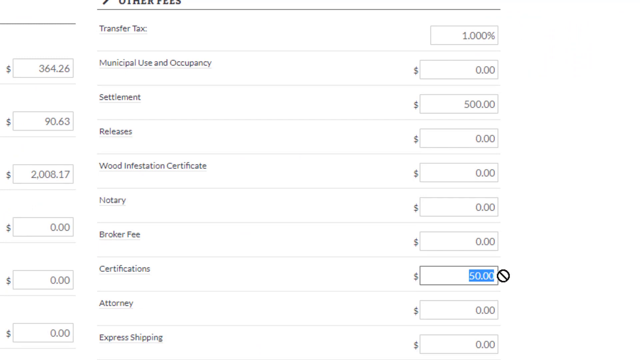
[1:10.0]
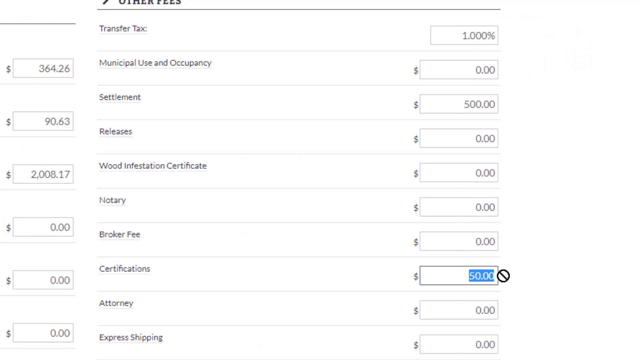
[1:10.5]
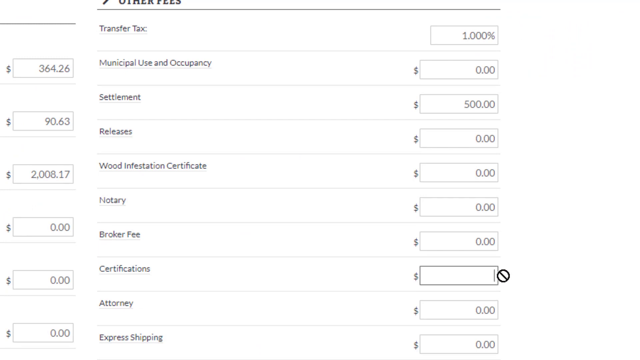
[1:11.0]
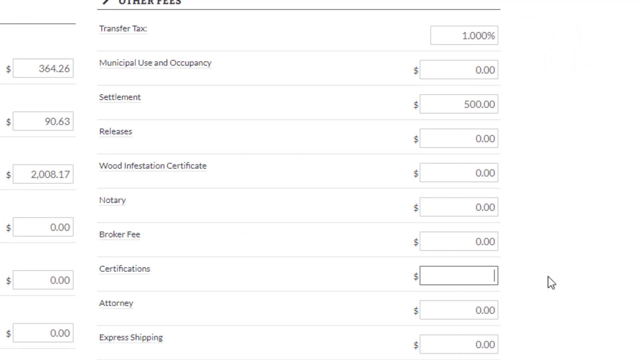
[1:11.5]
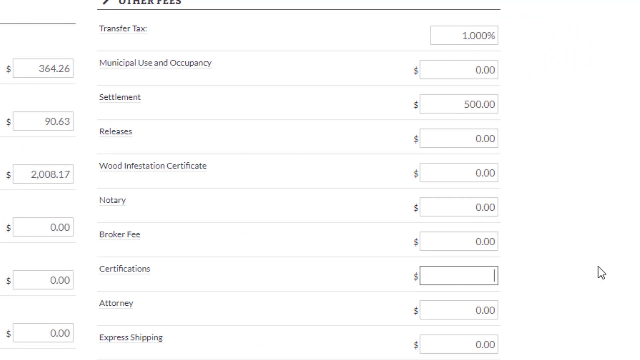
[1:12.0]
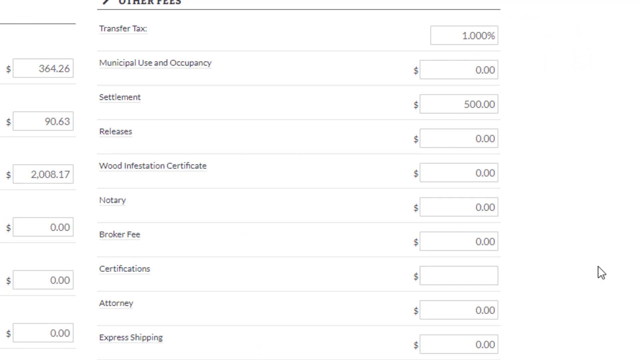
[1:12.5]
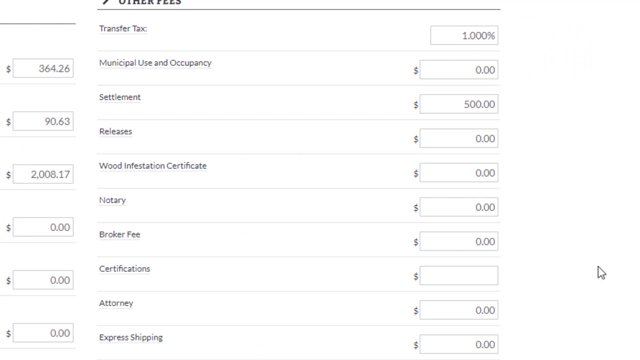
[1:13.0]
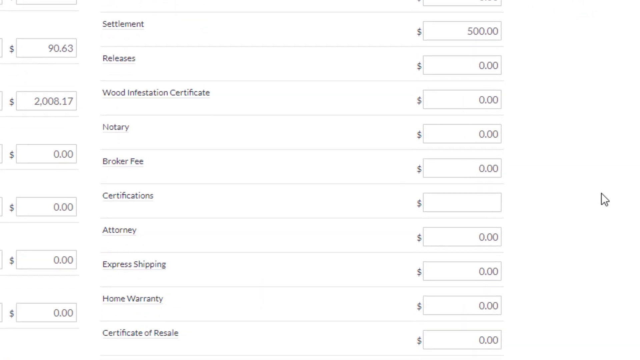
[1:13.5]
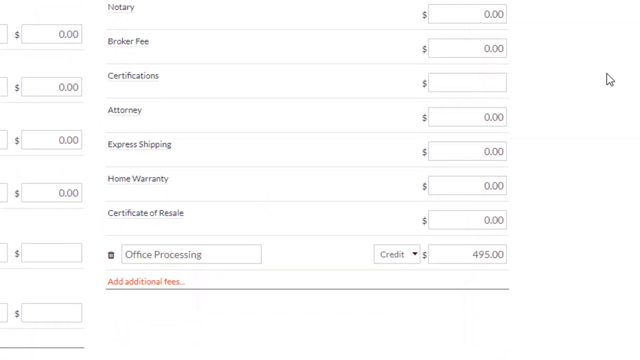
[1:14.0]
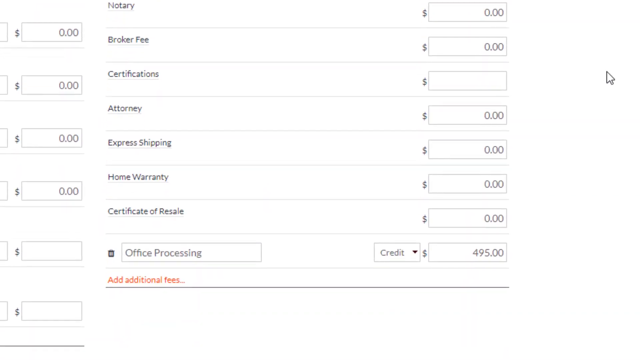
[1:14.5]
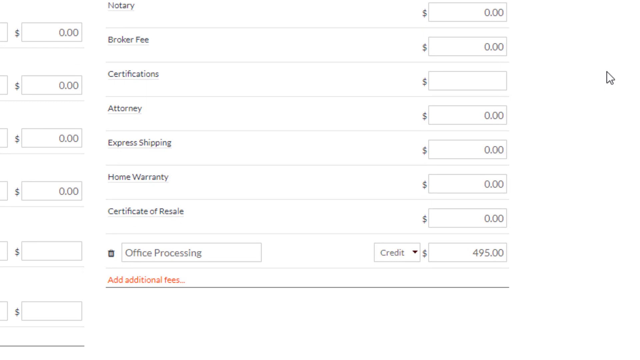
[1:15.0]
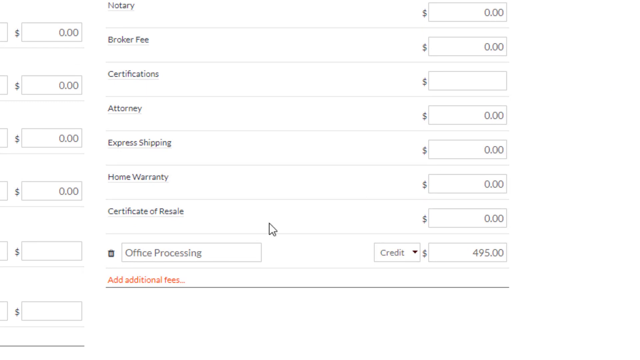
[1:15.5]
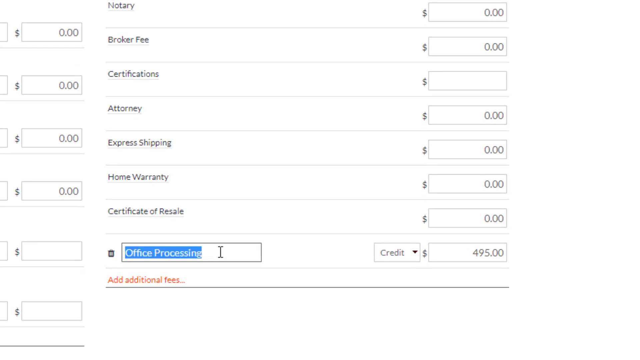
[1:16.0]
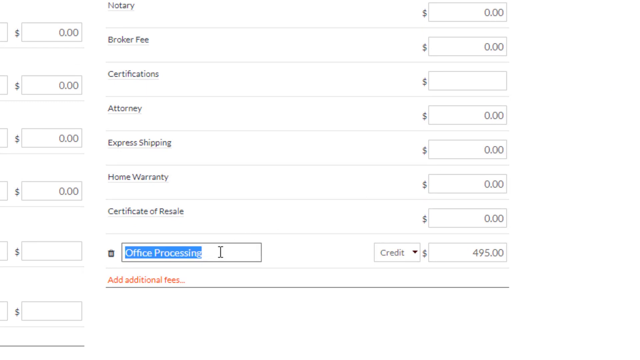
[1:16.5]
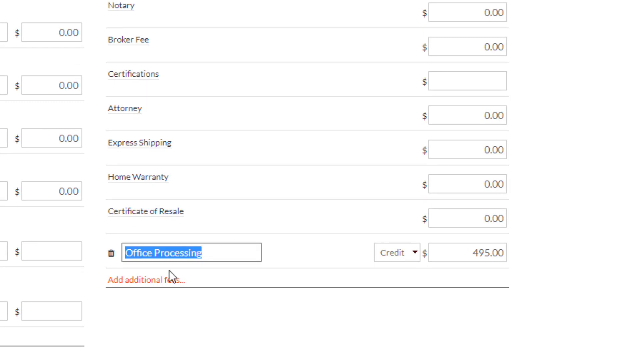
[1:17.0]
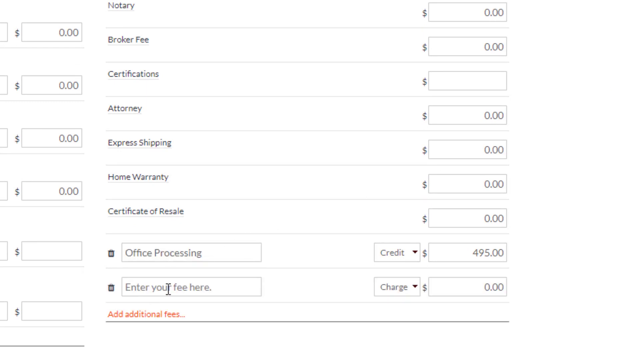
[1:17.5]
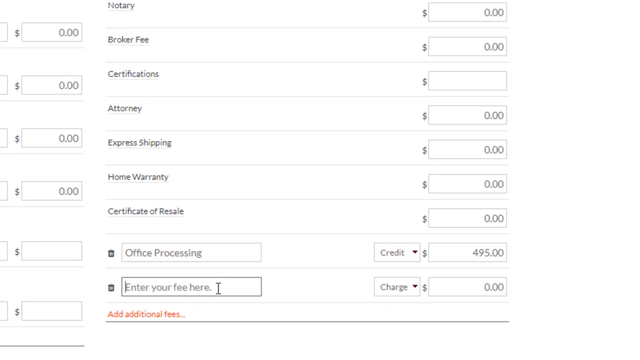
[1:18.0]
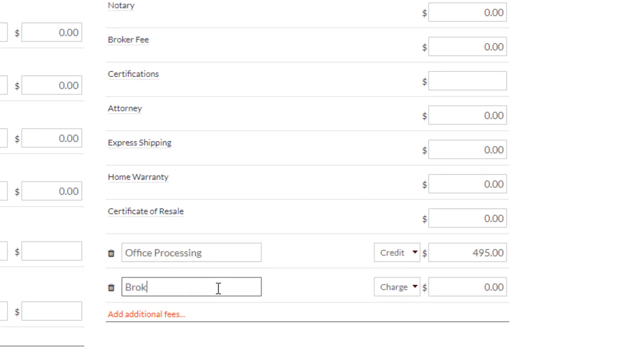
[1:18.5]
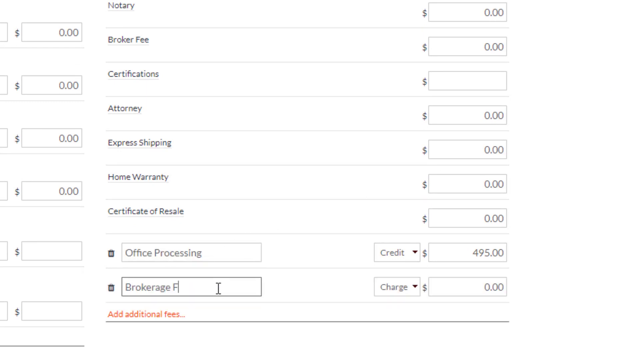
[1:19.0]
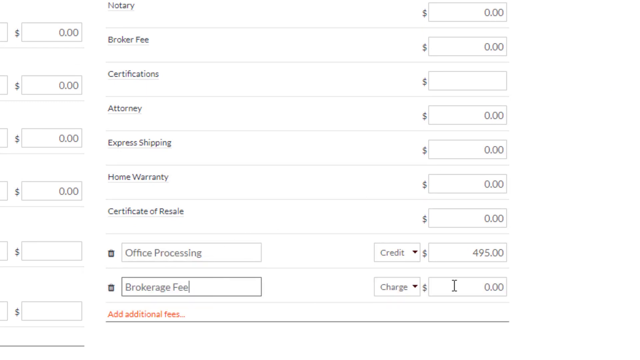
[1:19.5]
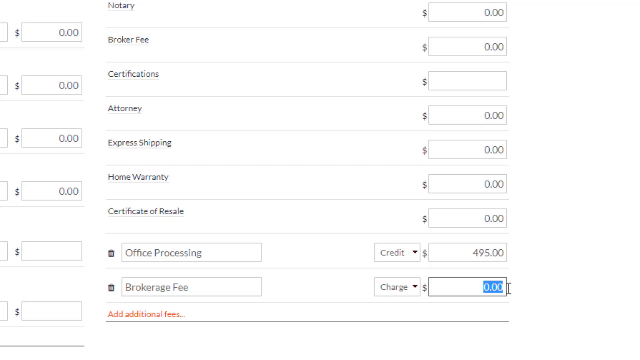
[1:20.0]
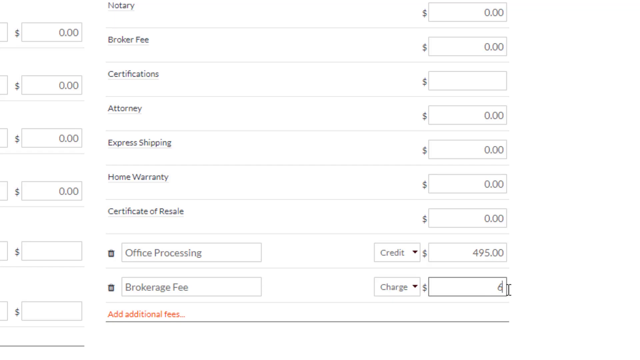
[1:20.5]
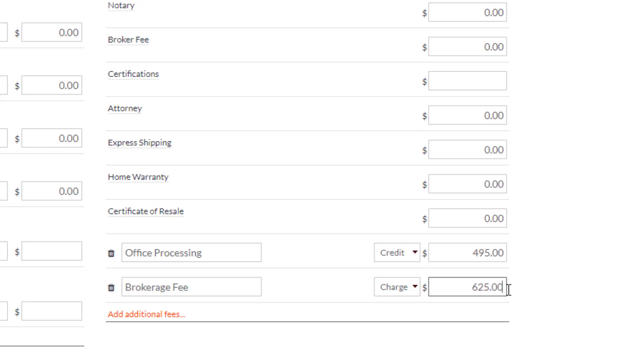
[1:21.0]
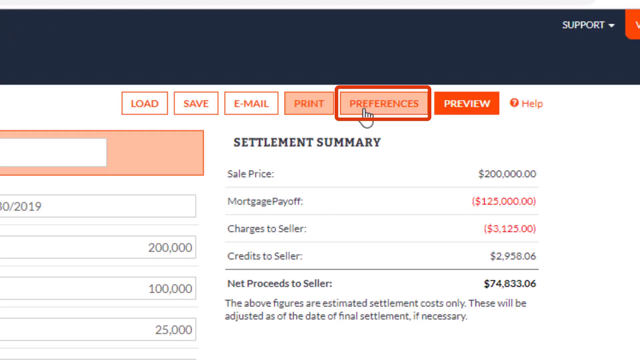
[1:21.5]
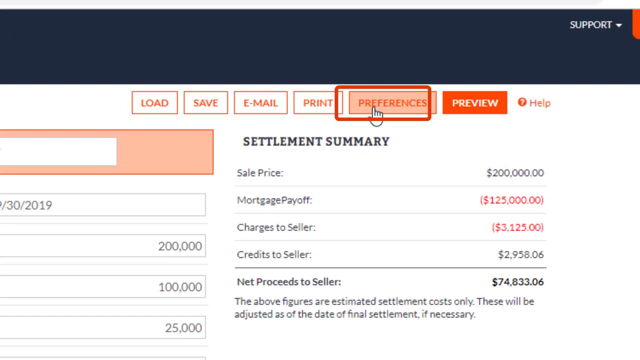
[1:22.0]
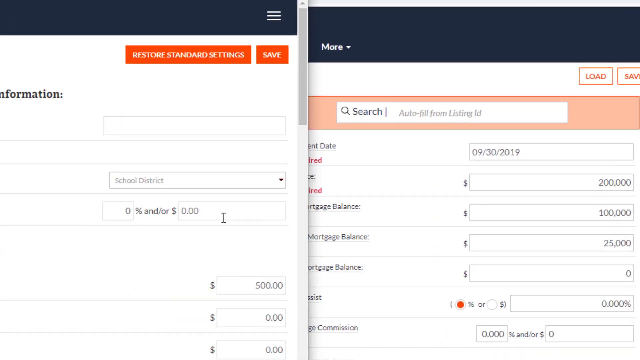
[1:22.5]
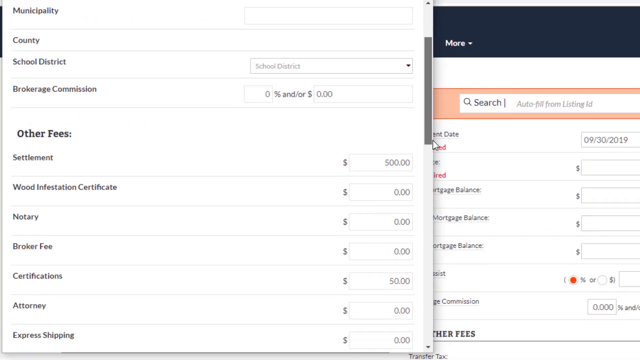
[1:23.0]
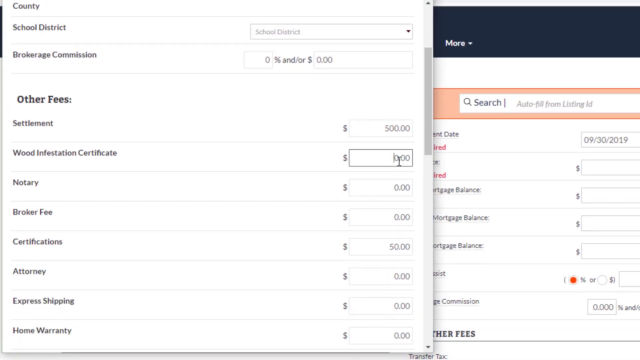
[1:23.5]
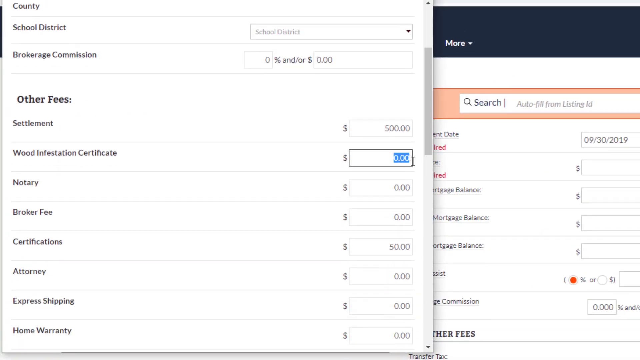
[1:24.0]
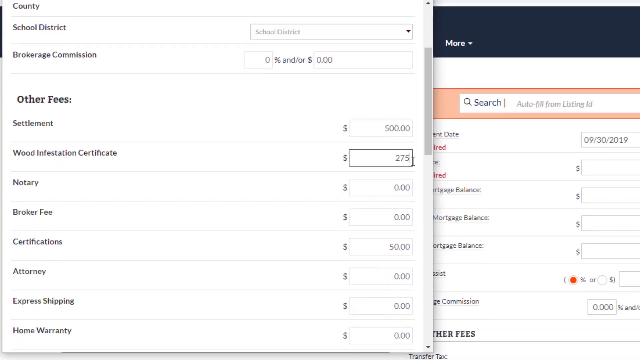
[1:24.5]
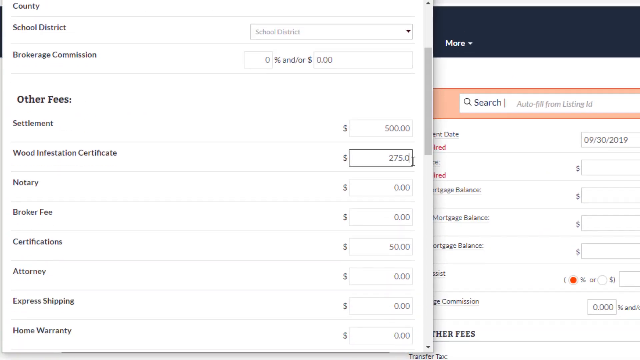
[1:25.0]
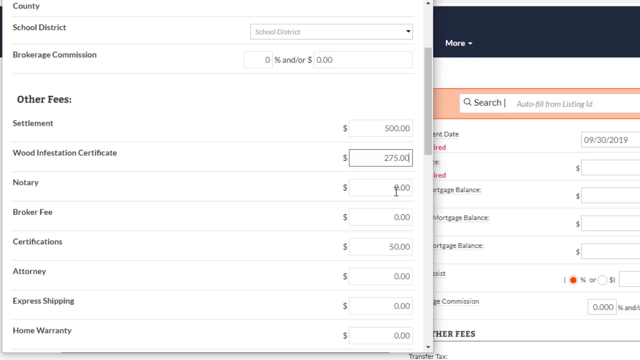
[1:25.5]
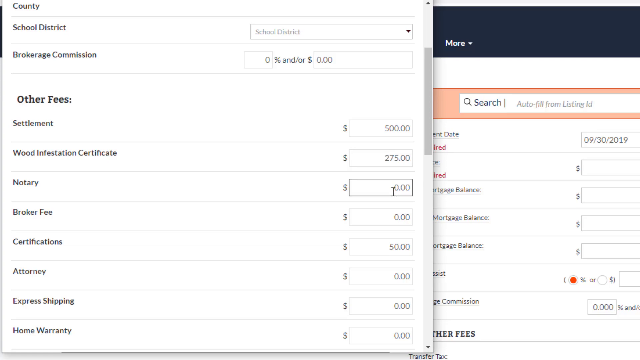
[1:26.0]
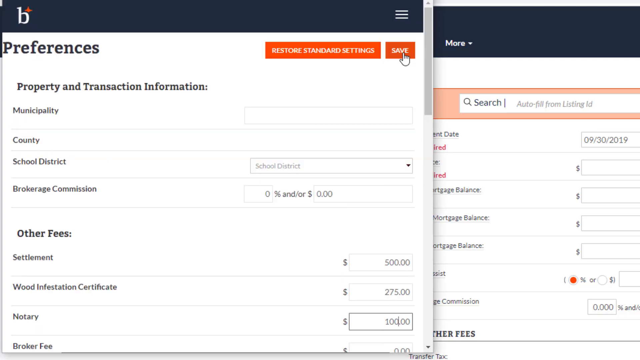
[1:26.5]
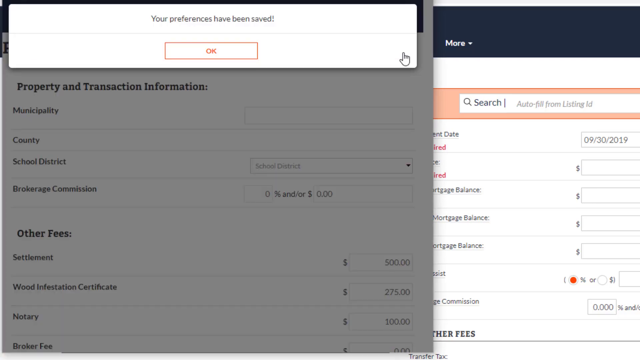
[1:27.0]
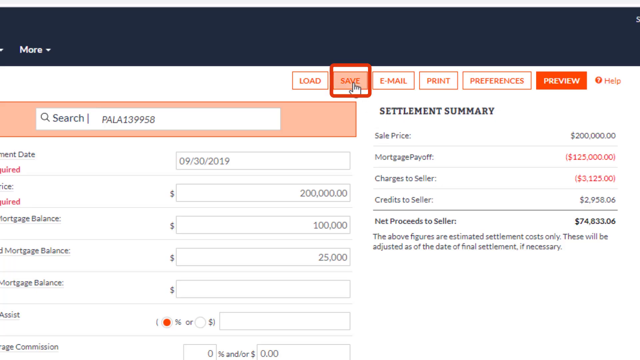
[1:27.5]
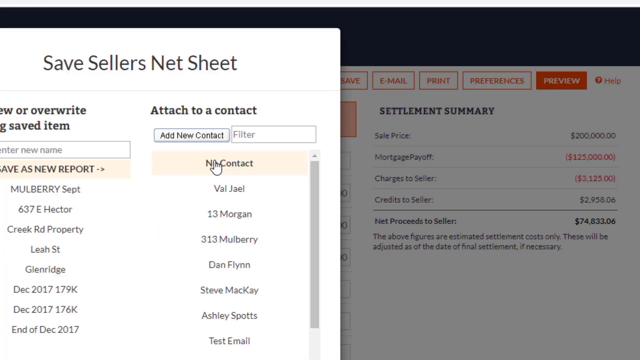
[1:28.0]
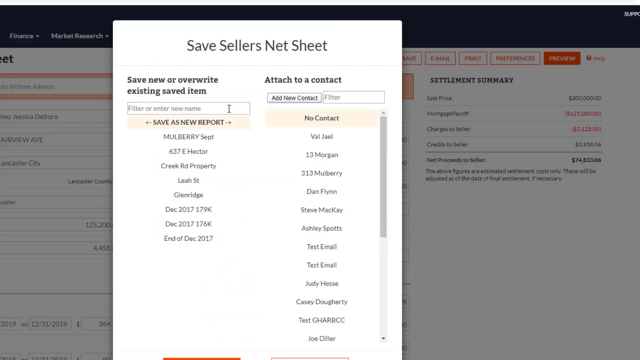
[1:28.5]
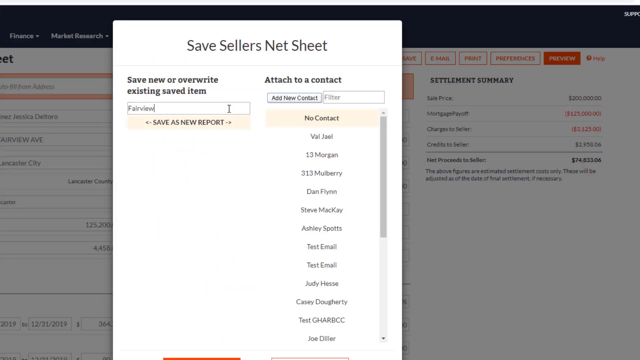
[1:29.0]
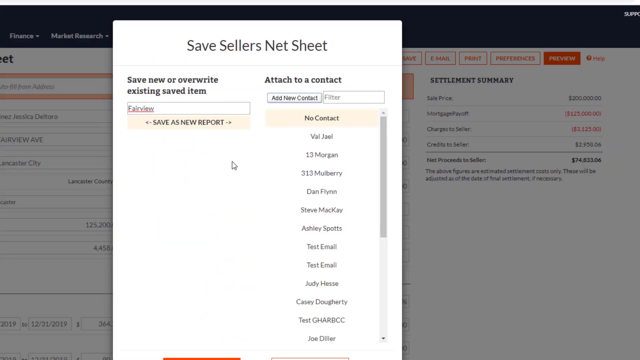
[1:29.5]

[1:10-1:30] The zoomed-in view of the Other Fees portion of the sheet shows its entries: transfer tax set to 1%, municipal use and occupancy set to zero, settlement set to $500, releases set to zero, wood infestation certificate set to zero, notary set to zero, broker fee set to zero, certifications set to $50, and attorney set to zero dollars. The user deletes the entry for certifications. He then adds an entry at the bottom of the list that says "Office Processing"; in a drop-down menu, credit is selected, and the number 495 is entered. He adds another fee by clicking the "Add Additional Fees" button, enters the title "Brokerage Fee," and puts the charge at $625. The video cuts sharply back to the upper right-hand corner of the overall sheet, where a red rectangle briefly highlights a button and a pop-up menu appears. The pop-up appears to be a popped-out version of the dataset just being worked on. The user sets wood infestation certificate to $275 and changes another number too quickly to see what is happening. He then very quickly closes and changes the information again. A red rectangle flashes, but much too quickly to follow.